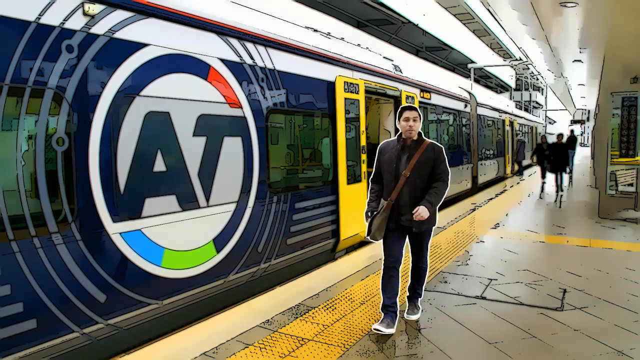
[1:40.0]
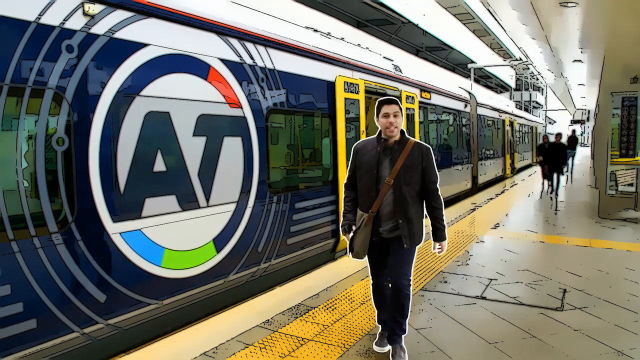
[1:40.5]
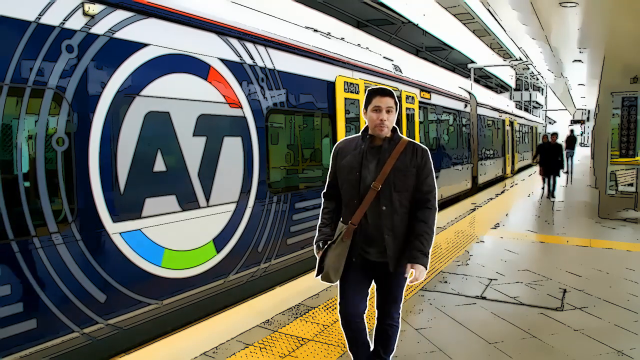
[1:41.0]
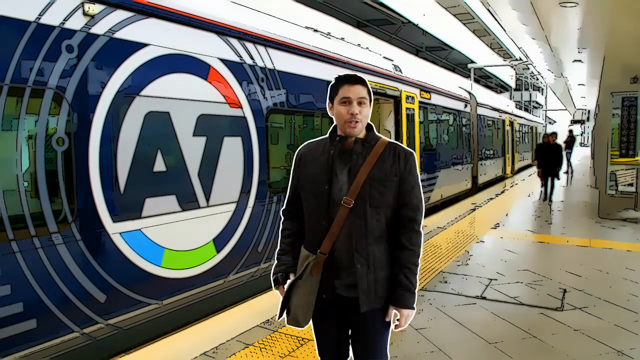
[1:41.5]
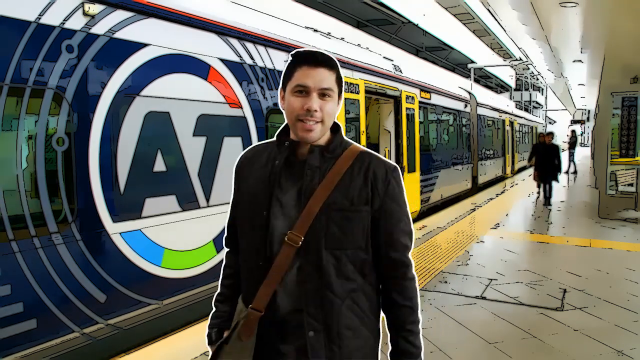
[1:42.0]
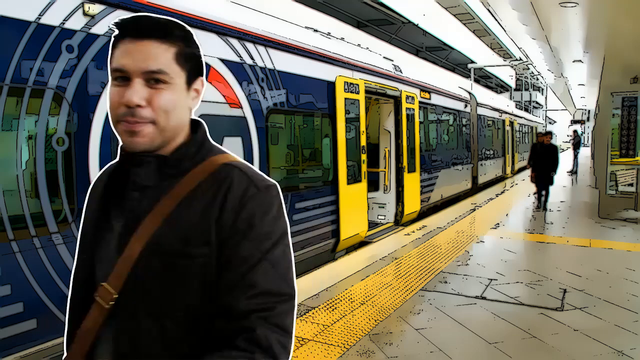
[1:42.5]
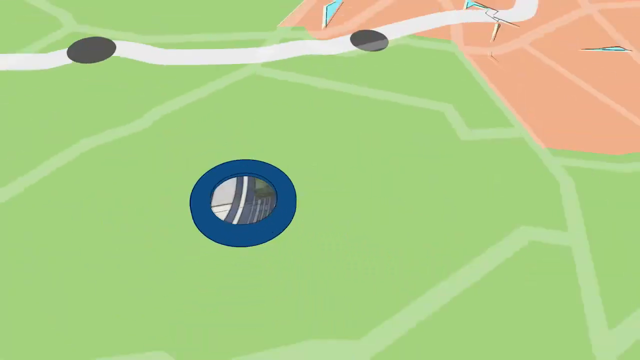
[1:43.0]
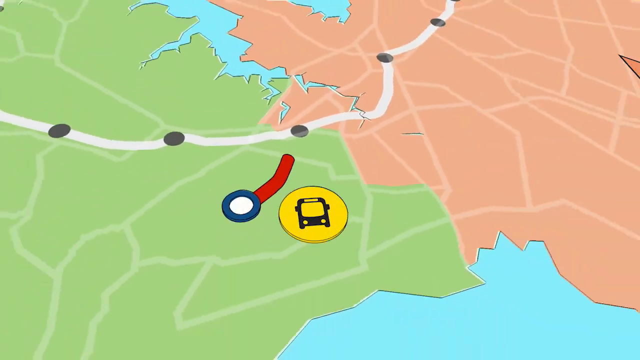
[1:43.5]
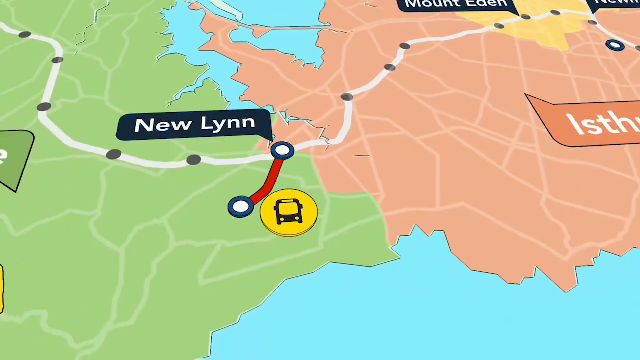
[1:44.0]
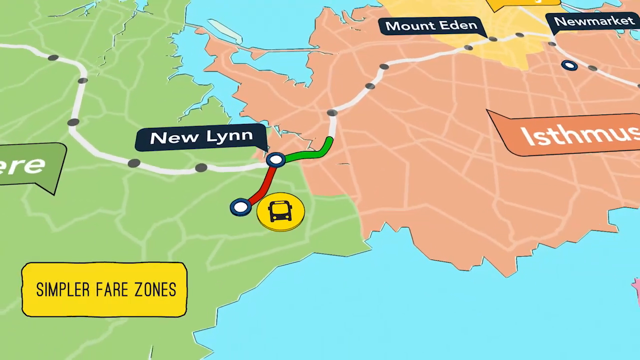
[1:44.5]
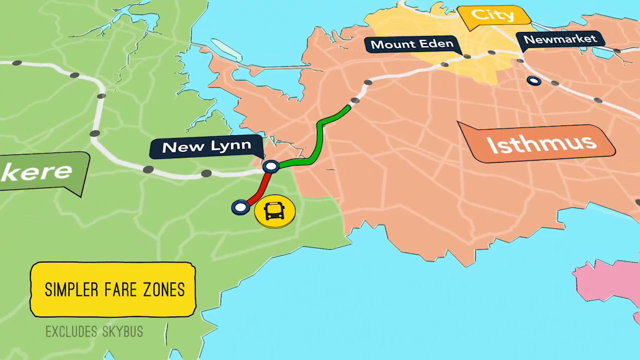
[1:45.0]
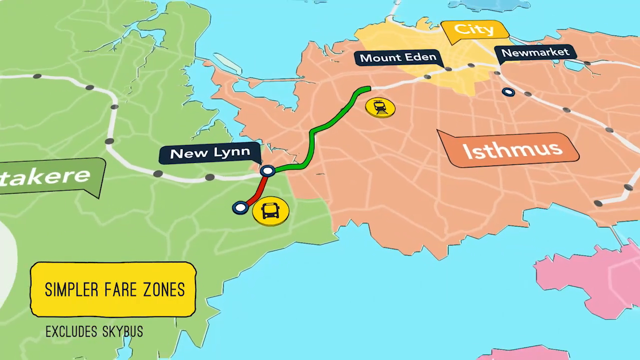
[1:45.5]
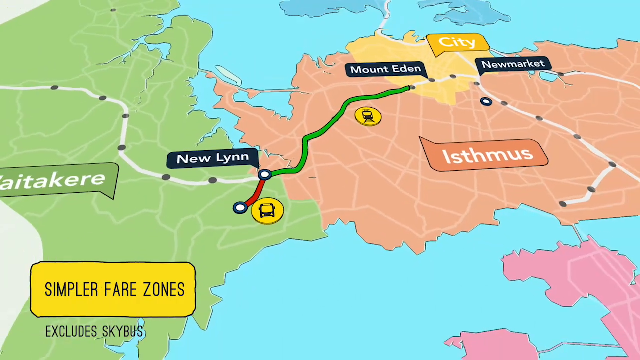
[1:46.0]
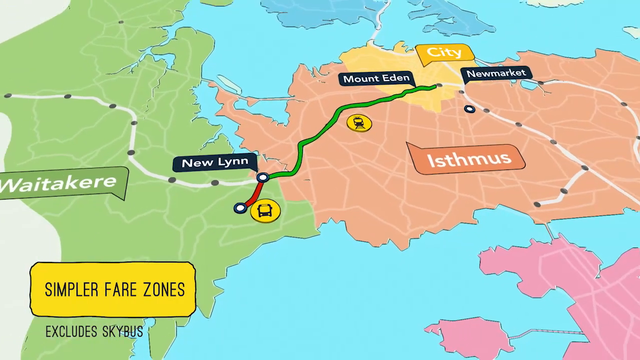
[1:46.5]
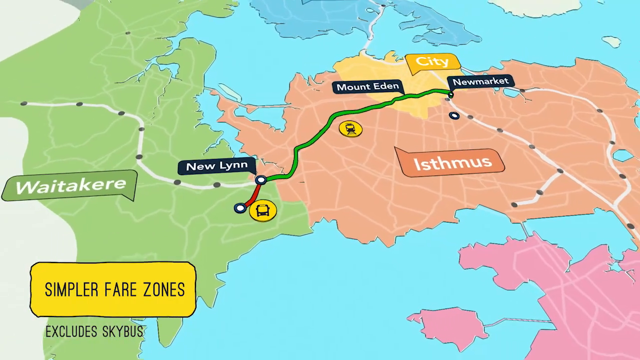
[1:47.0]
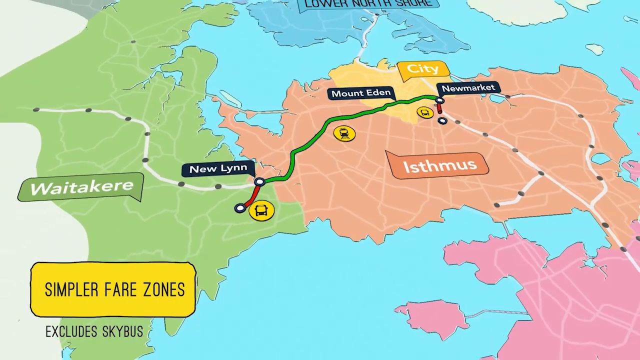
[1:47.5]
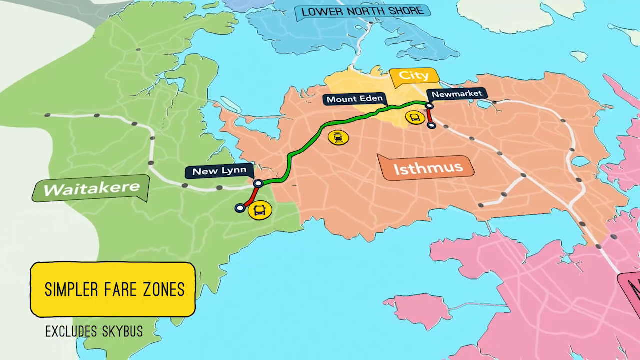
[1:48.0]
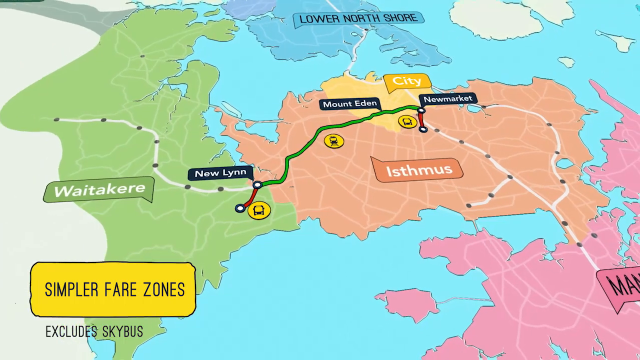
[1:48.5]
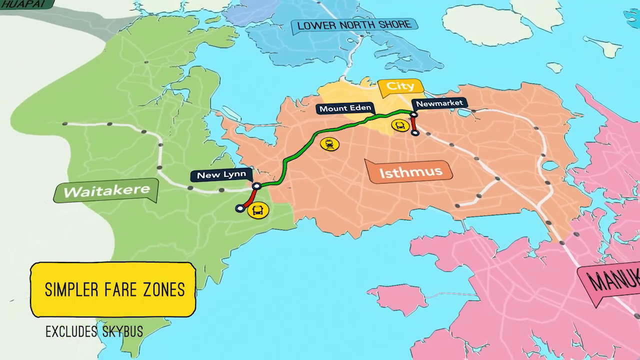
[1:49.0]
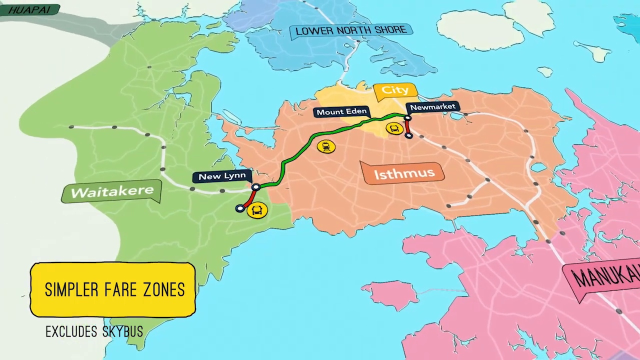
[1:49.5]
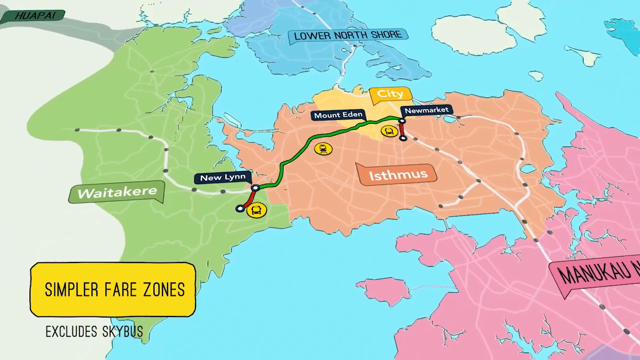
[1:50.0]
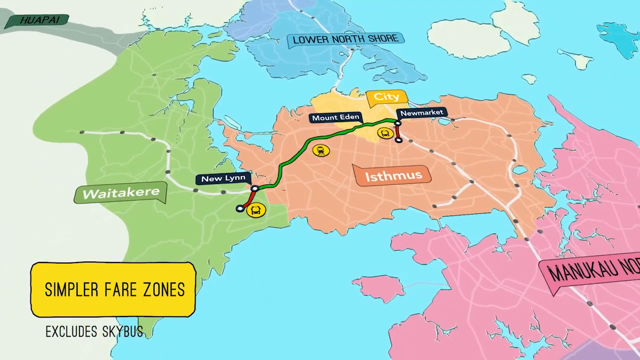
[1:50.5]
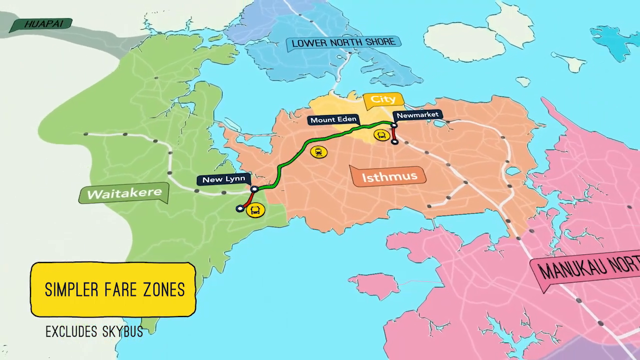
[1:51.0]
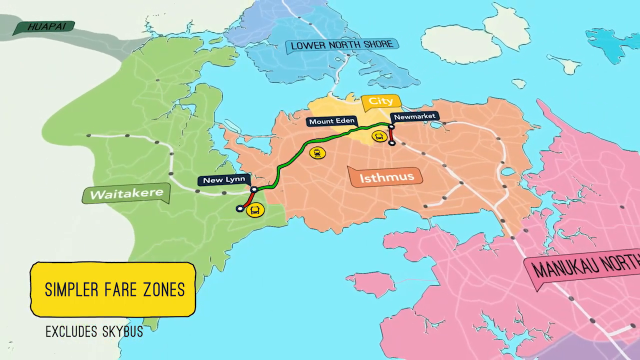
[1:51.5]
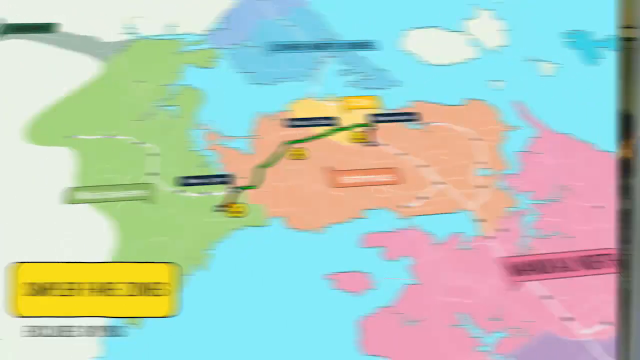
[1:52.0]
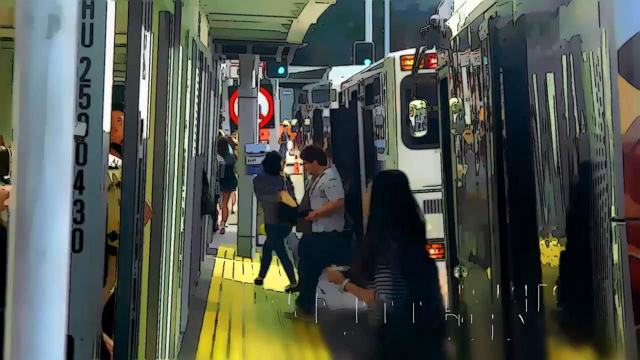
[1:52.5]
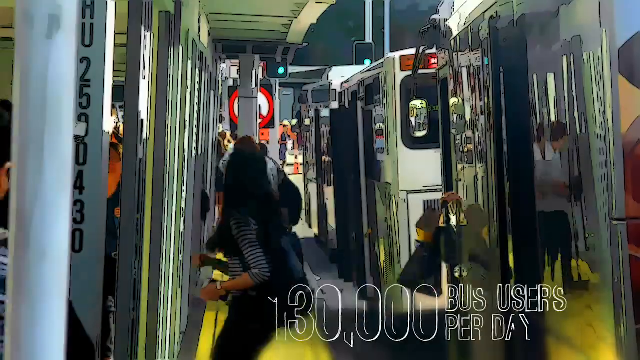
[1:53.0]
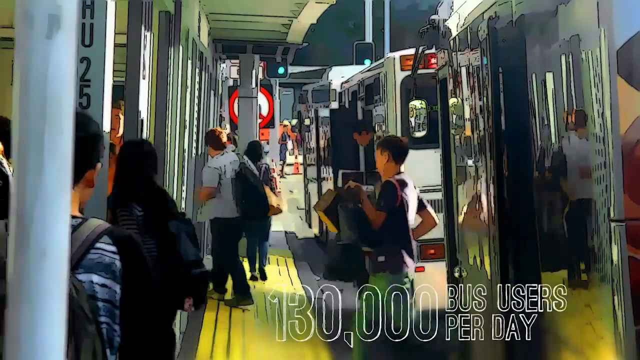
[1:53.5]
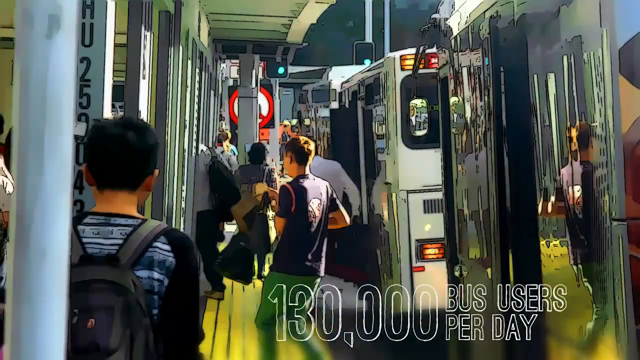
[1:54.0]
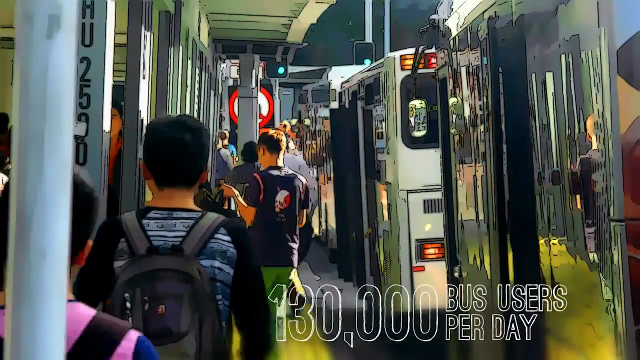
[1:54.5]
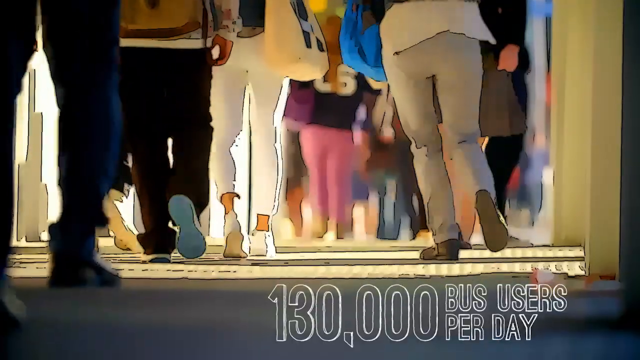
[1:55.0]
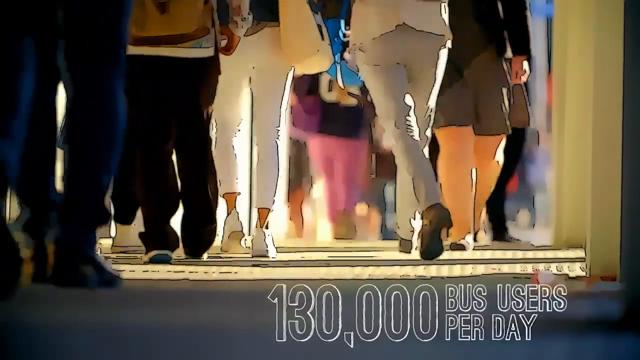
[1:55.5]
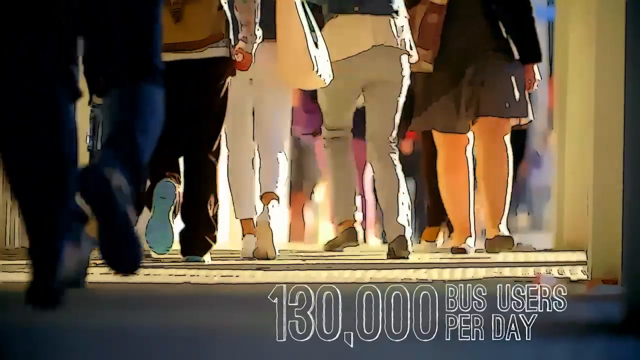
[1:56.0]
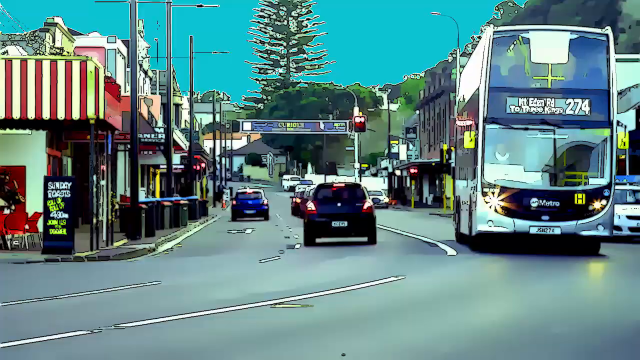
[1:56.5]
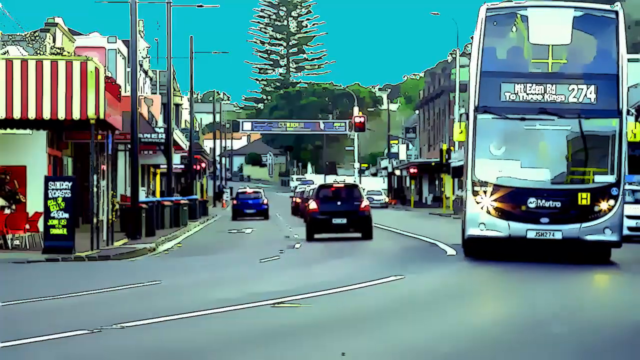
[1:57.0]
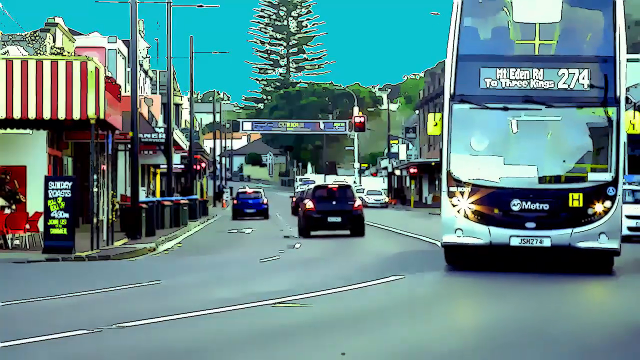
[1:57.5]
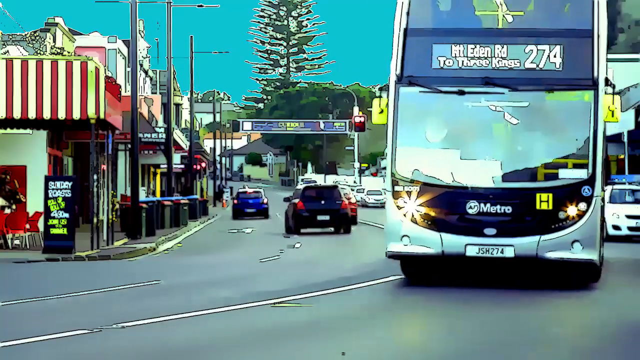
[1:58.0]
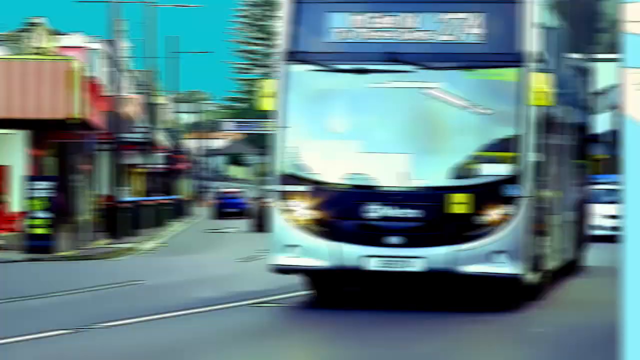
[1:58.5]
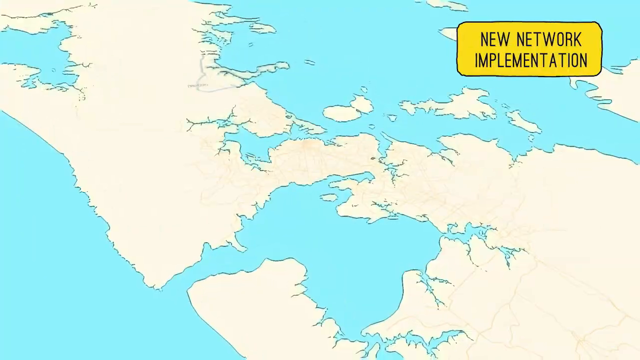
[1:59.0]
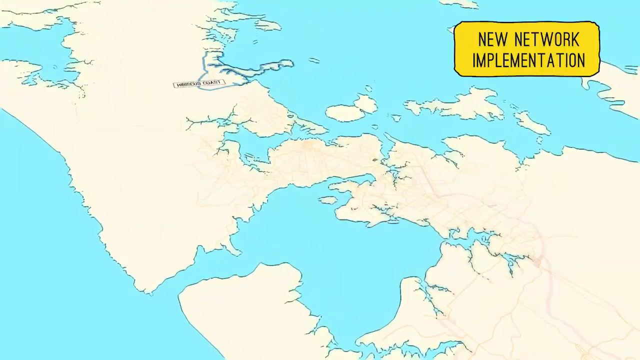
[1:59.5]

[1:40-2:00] The man with the white outline and shoulder bag, having just exited the AT train with yellow doors, walks towards the camera, with other people walking towards the camera in the background. He walks past the camera smiling, and the page changes to an overall graphic of a map showing simpler fare zones. A line joins a bus terminal through New Lynn, then on to Mount Eden and New Market. The line is red from the station, changes to green when it reaches New Lynn, where there is a connecting train station, continues green past Mount Eden and New Market, then changes to red where a bus sign indicates a bus journey. The map changes to a busy bus terminal with lots of people exiting different buses, and a caption at the bottom of the screen says "130,000 bus users per day". Shots follow of a busy pedestrian area with lots of feet and legs, some rushing, then a busy road with a 274 double-decker bus coming towards the camera. Finally a map shows the new network implementation.